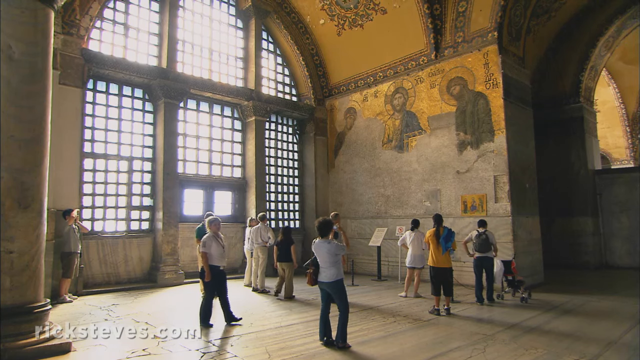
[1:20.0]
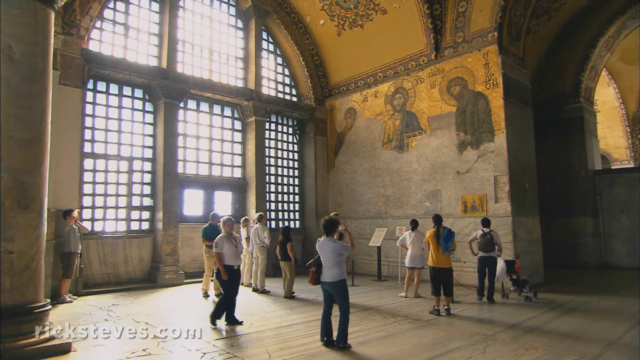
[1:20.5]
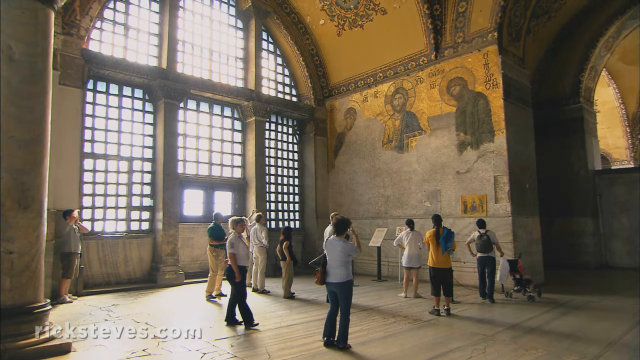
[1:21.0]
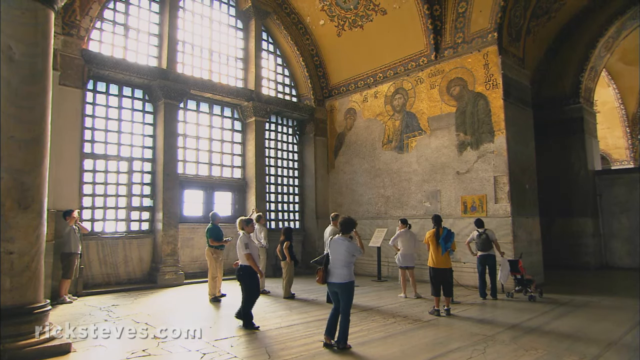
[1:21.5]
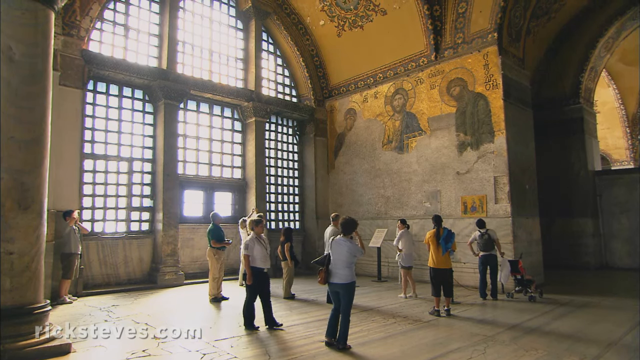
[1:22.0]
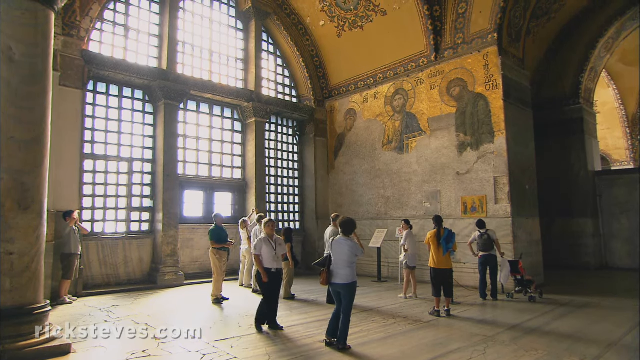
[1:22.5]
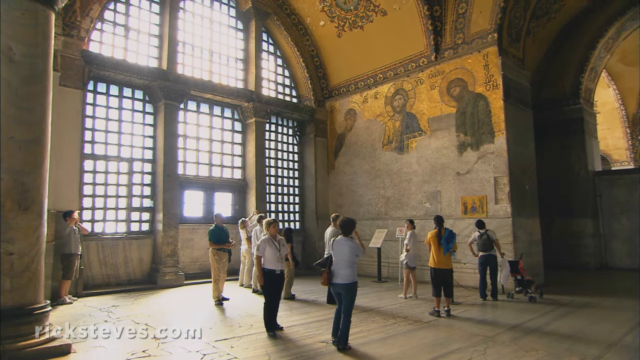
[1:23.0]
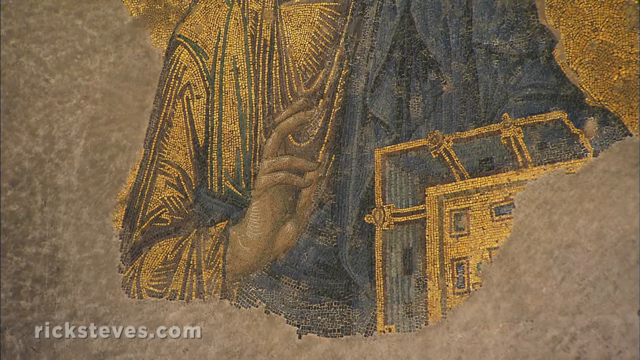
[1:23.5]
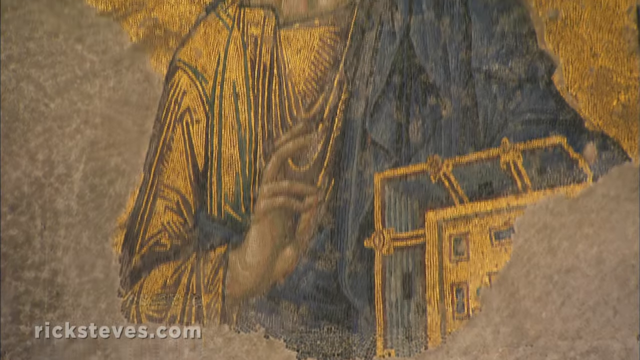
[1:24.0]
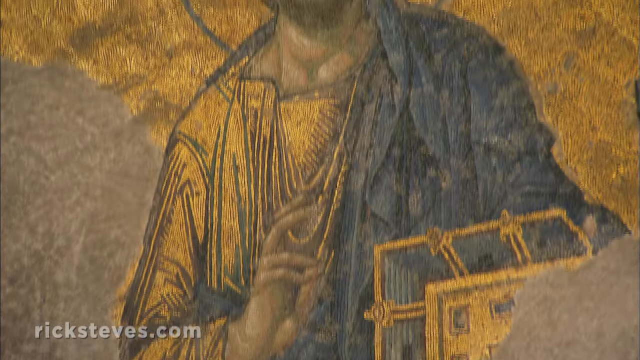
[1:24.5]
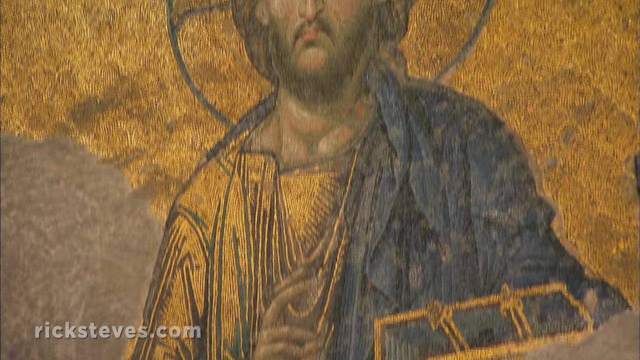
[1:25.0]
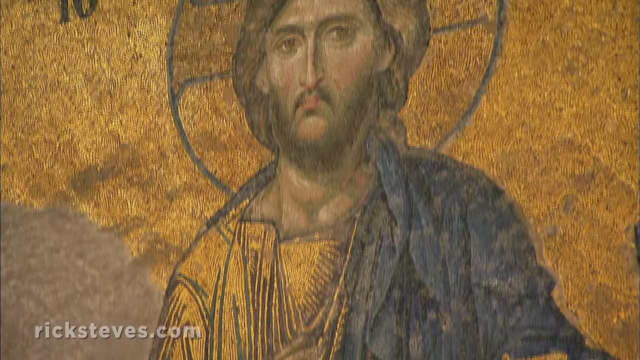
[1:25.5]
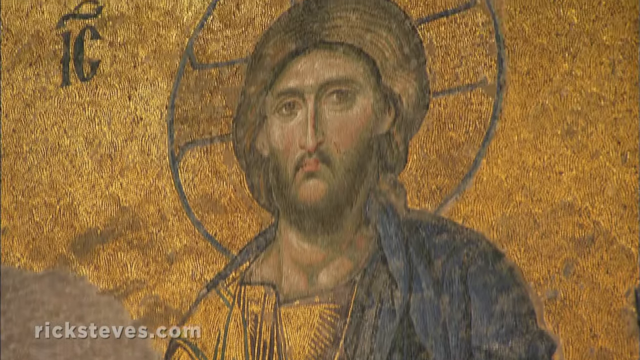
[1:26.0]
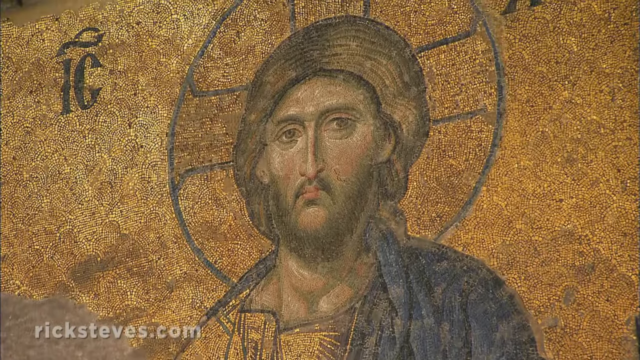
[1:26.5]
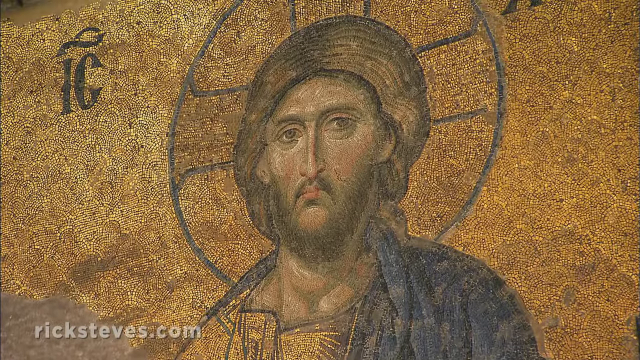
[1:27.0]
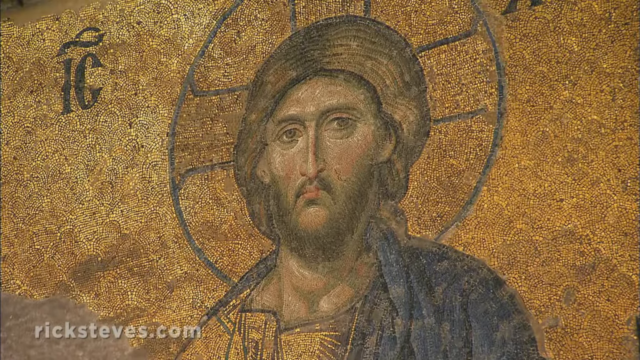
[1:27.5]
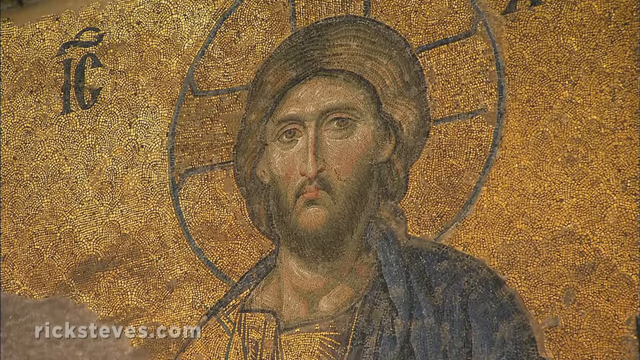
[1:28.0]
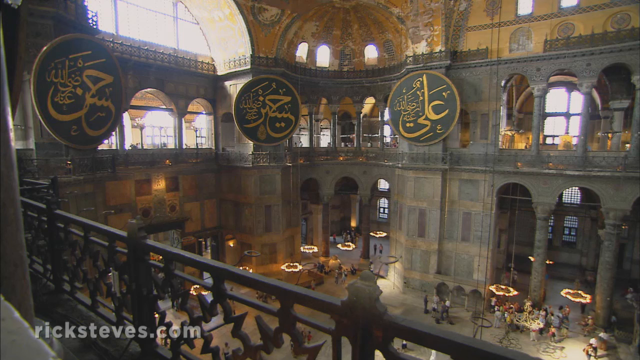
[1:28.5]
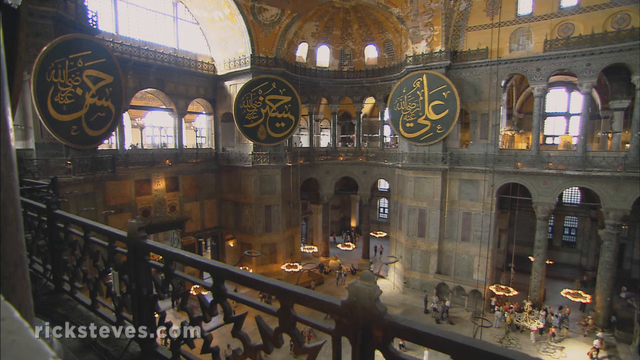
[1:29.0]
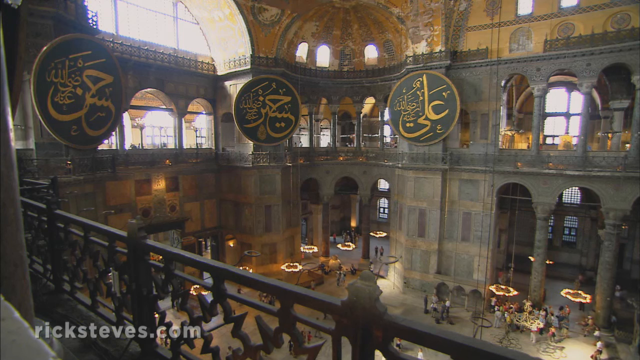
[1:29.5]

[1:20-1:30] The three old figures are shown, with half of their bodies cut off. The camera pans to the middle figure, probably Jesus Christ or God, and gives a close-up of his face. The figures are made of tiny pebbles and rocks, with careful shading. Right next to it is "IC" with asterisks. The background is gold and red. Many people crowd around taking pictures of it, and a security guard watches them.